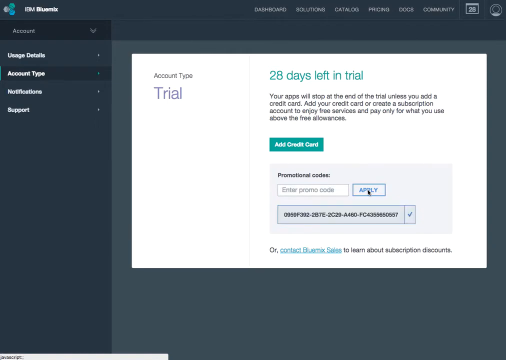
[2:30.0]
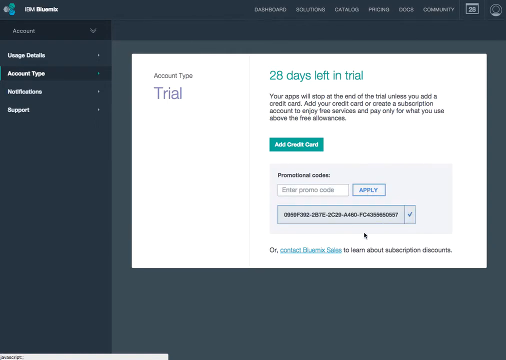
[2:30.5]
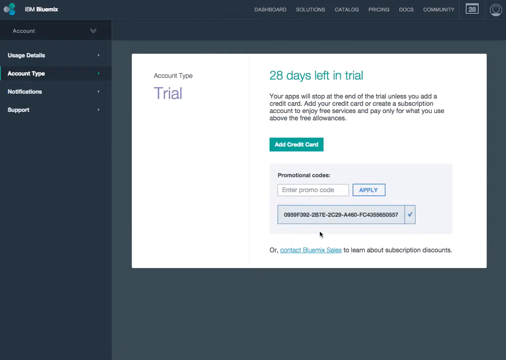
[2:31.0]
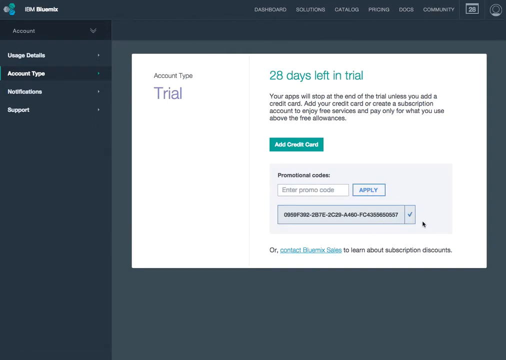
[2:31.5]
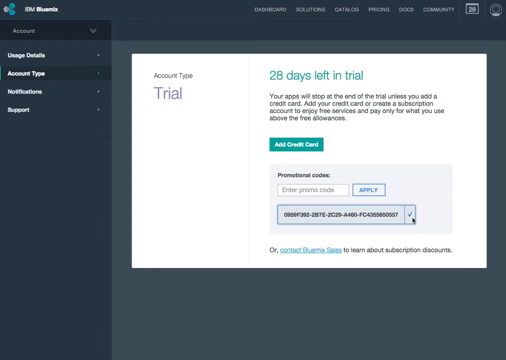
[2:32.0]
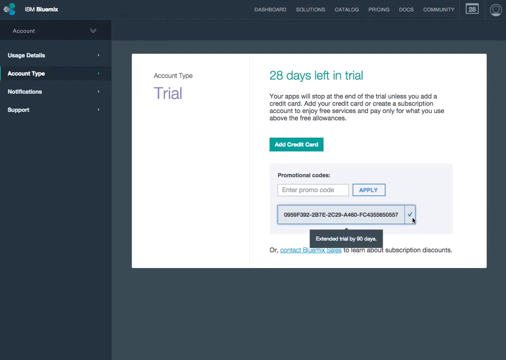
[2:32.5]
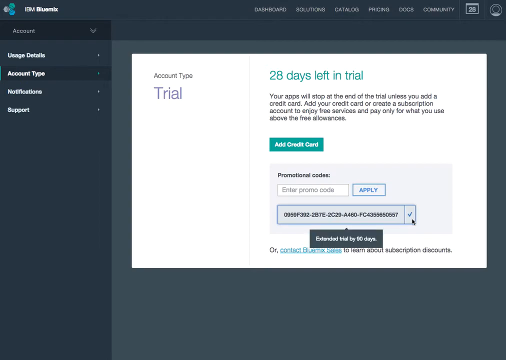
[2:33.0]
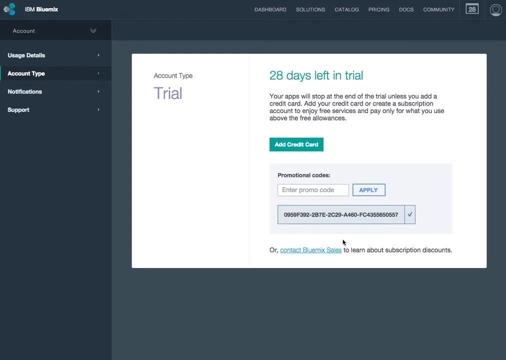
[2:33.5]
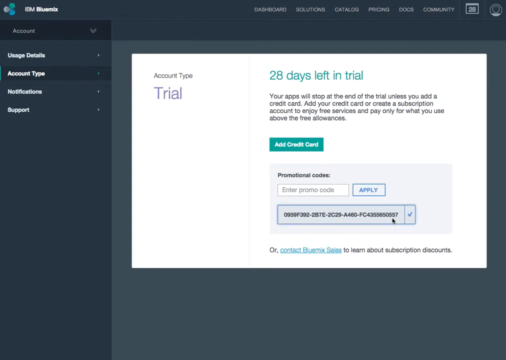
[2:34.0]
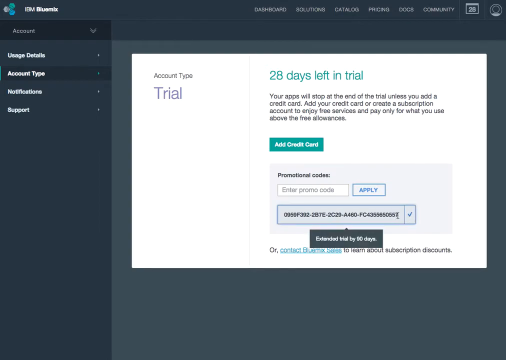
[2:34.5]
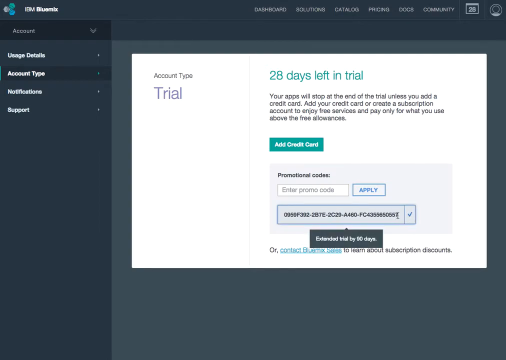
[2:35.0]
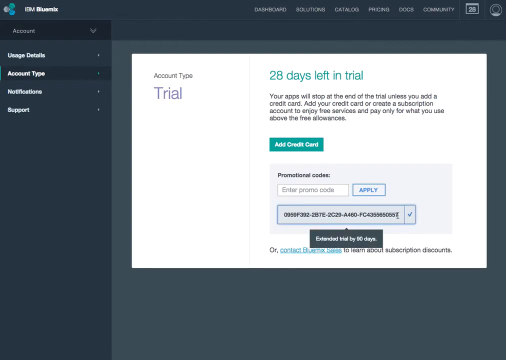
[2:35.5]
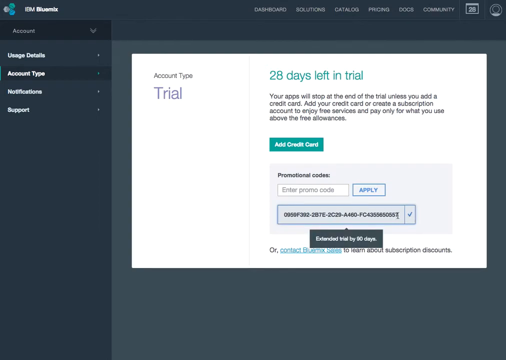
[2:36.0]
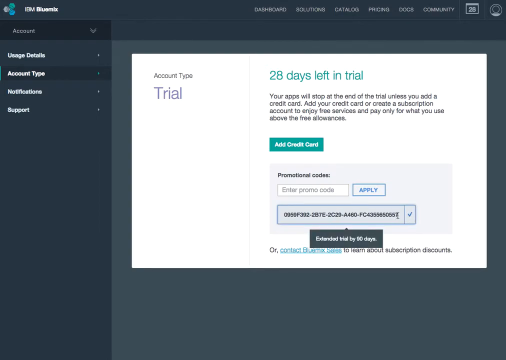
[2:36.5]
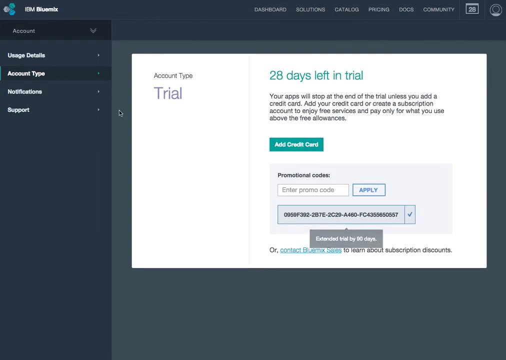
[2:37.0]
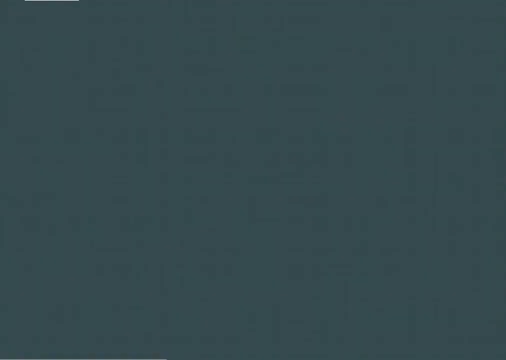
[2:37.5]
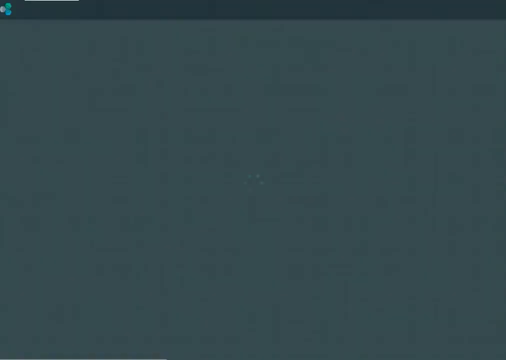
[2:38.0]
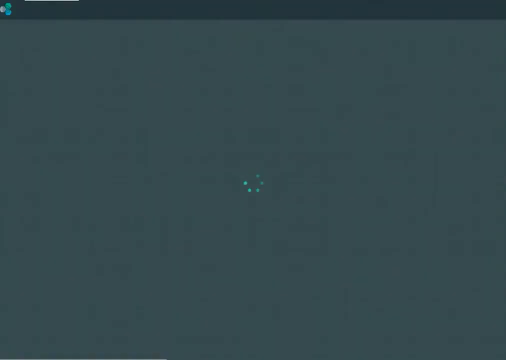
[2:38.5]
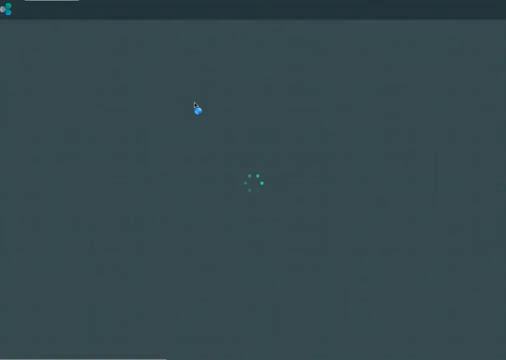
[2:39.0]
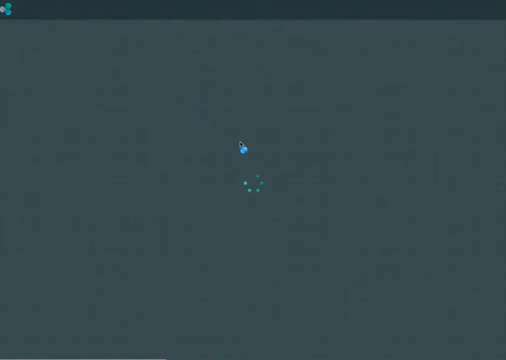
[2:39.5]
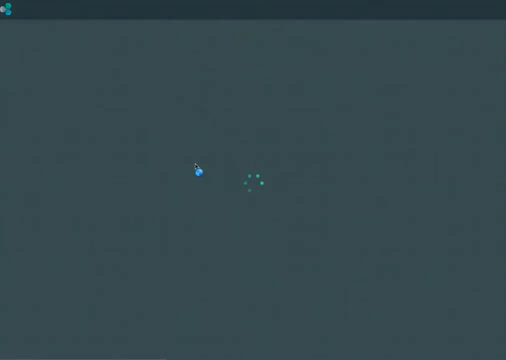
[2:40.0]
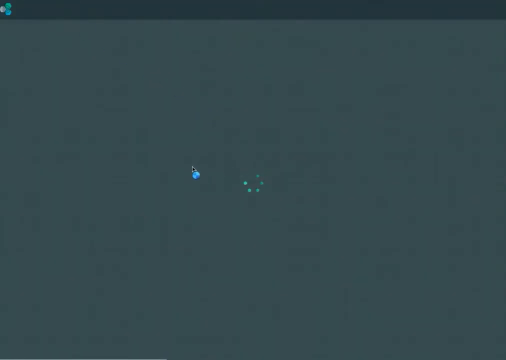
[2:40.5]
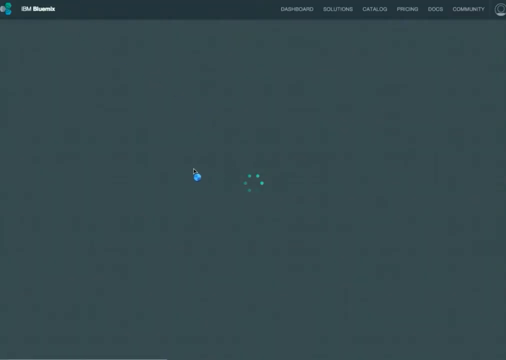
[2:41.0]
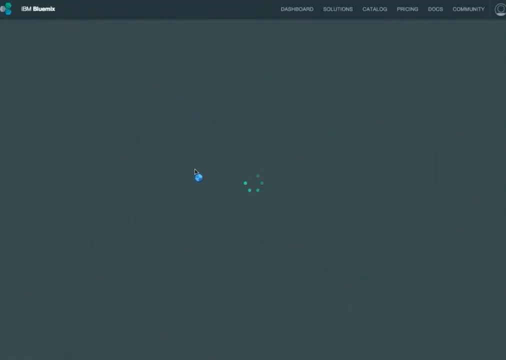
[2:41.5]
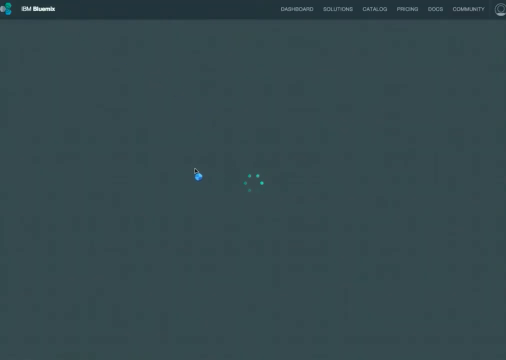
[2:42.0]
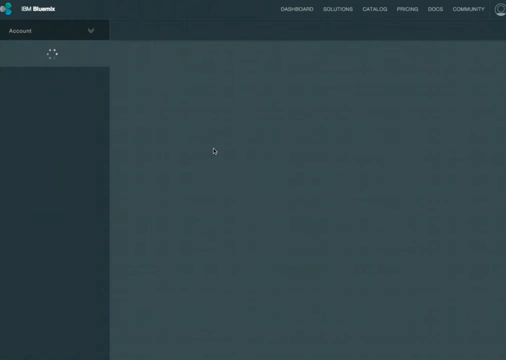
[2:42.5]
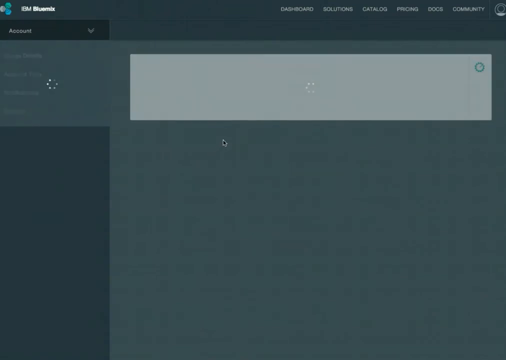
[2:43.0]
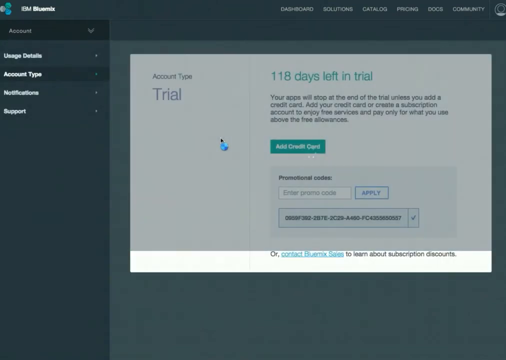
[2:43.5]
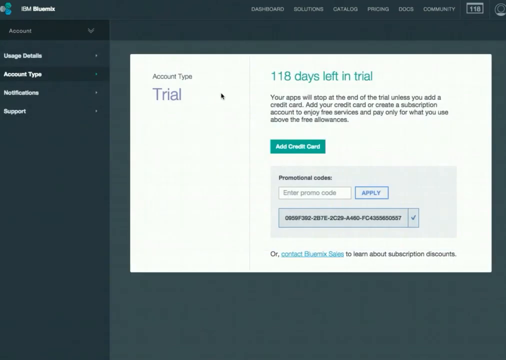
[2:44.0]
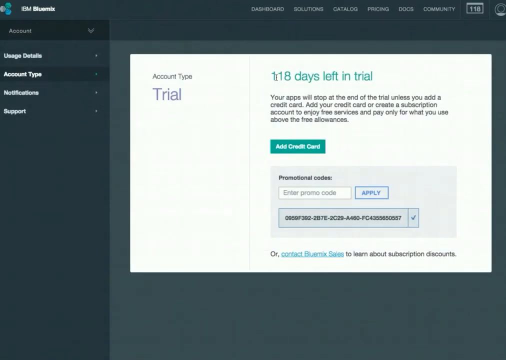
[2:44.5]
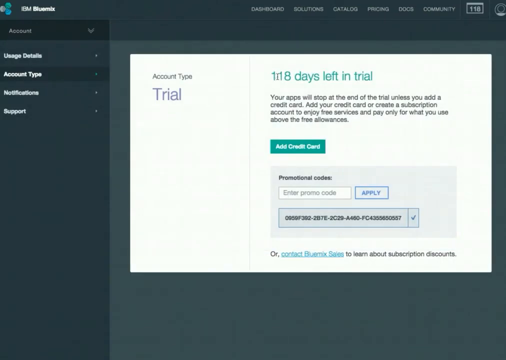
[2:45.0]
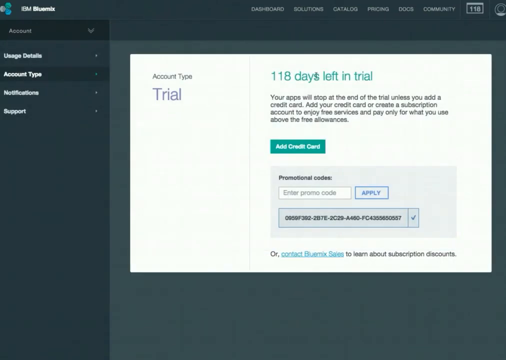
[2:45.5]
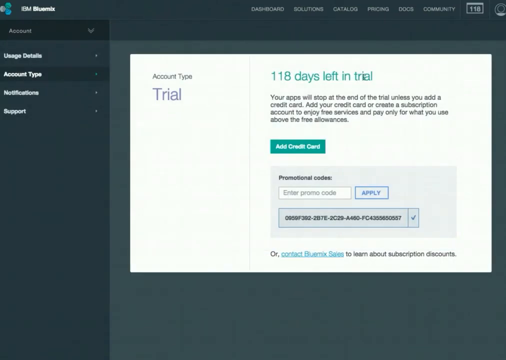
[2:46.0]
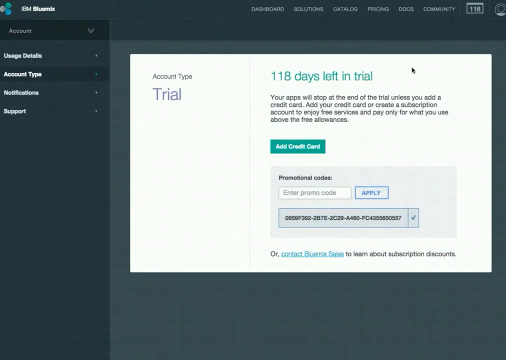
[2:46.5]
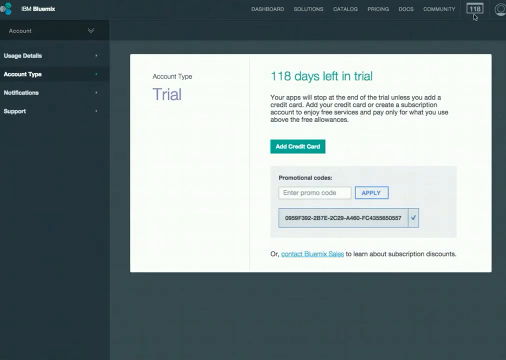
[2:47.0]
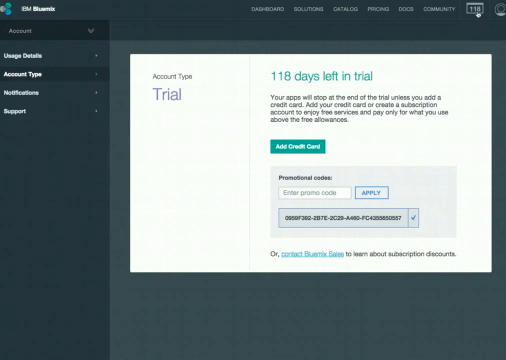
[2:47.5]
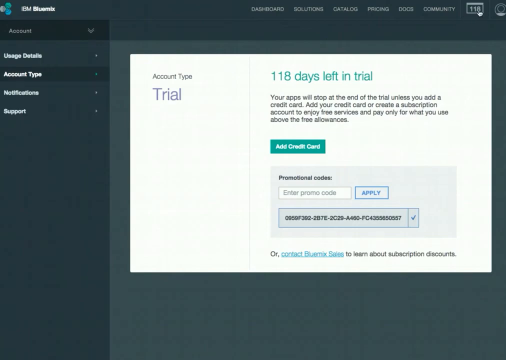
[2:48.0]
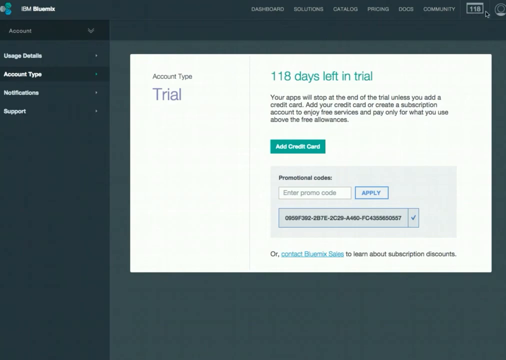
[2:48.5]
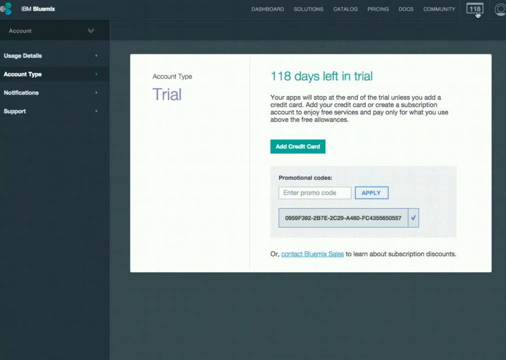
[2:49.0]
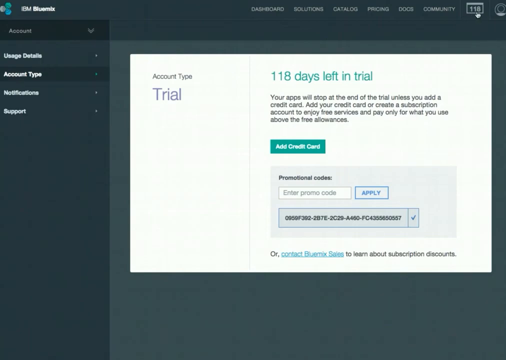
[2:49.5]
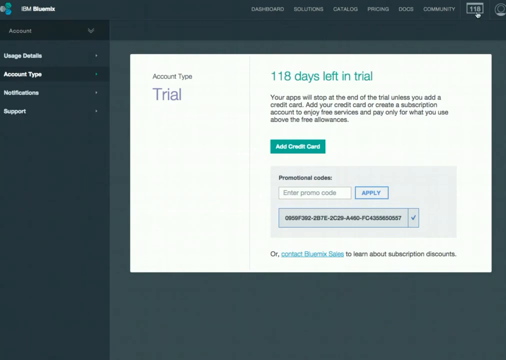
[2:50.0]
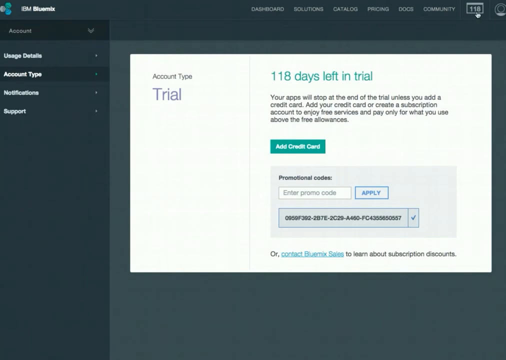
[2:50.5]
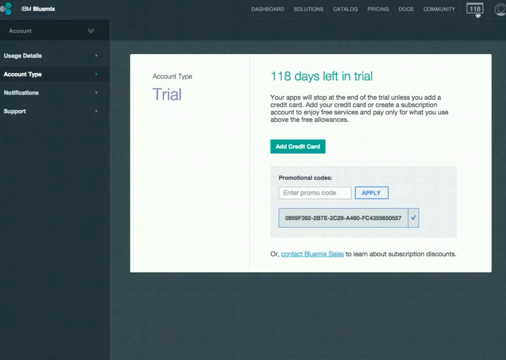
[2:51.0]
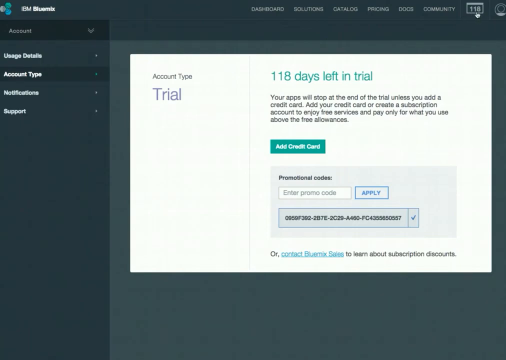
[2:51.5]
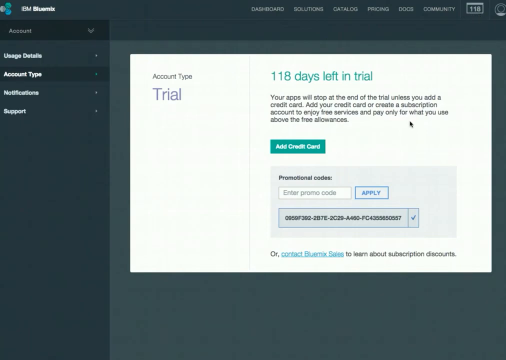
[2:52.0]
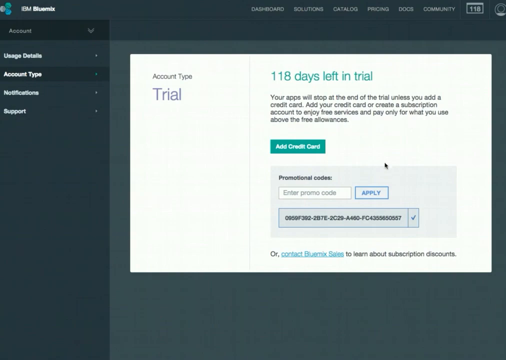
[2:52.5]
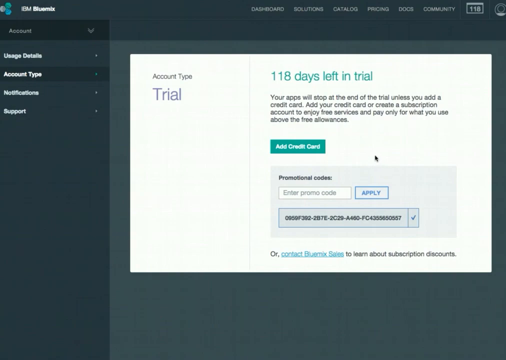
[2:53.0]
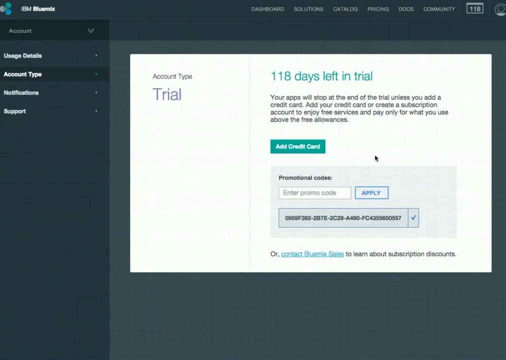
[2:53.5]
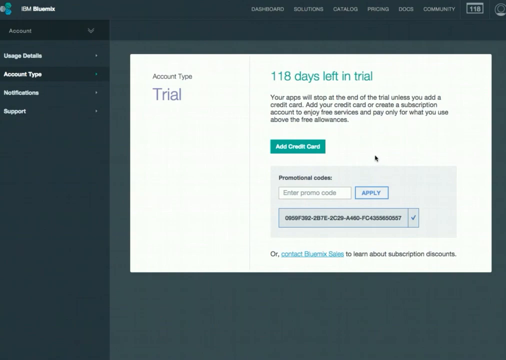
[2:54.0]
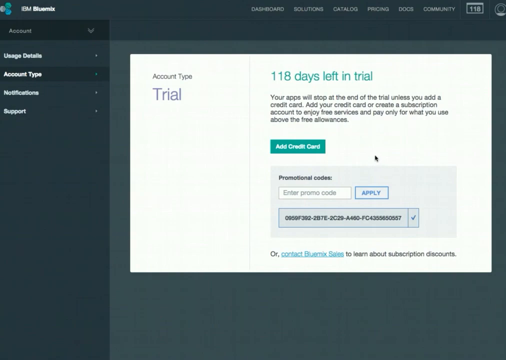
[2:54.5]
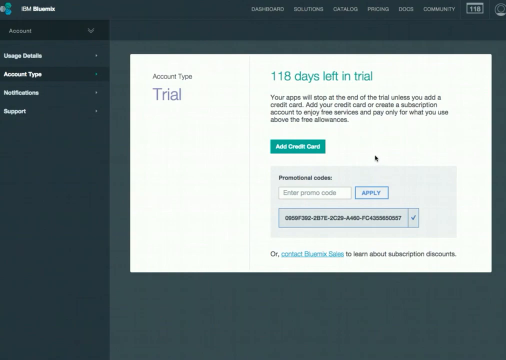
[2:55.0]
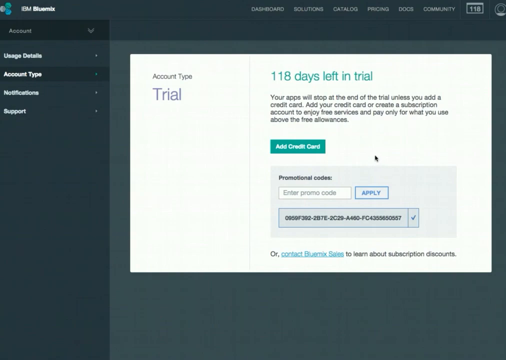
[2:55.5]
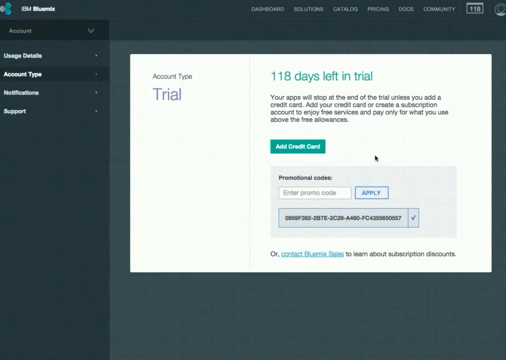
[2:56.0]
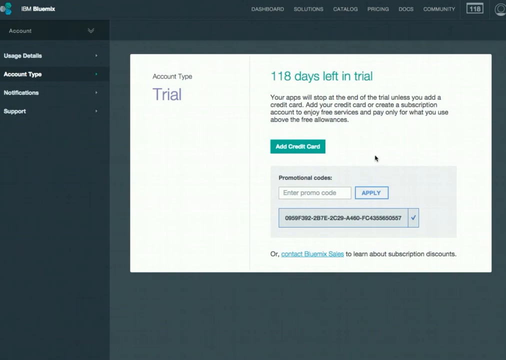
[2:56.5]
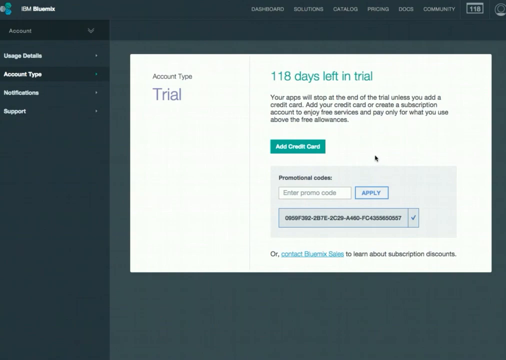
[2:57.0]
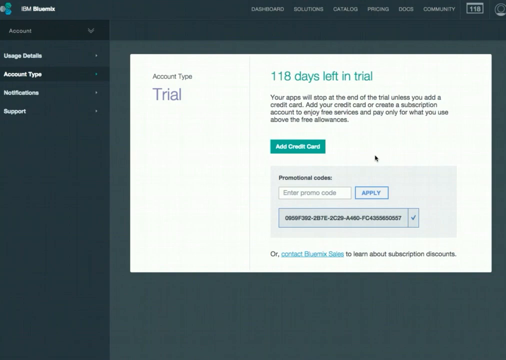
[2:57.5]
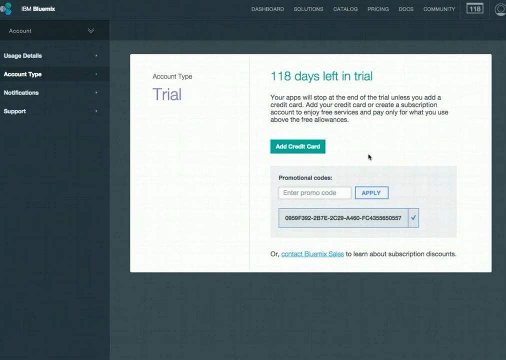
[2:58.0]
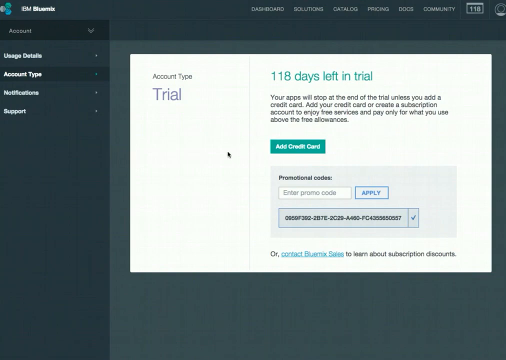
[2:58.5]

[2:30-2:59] The account type webpage is shown, with a vertical menu on the left and a horizontal menu on the upper right. The mouse pointer sways to the right and hovers over the bottom section of the account type pop-up window, staying on a long and difficult software key there. The pointer moves underneath the software key and then back up to it. The webpage then starts to load, with a circular progress object in the middle of the screen, and the pointer comes close to it. The pointer then goes up to the top right, onto a white, square button that looks like it says 110, and then moves to the center of the account type box.